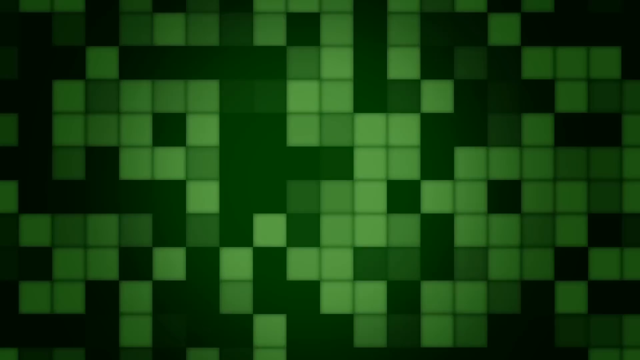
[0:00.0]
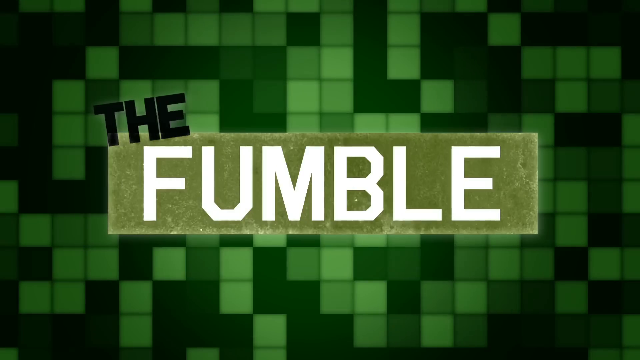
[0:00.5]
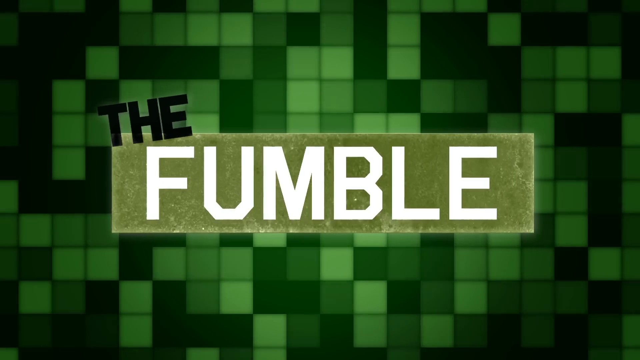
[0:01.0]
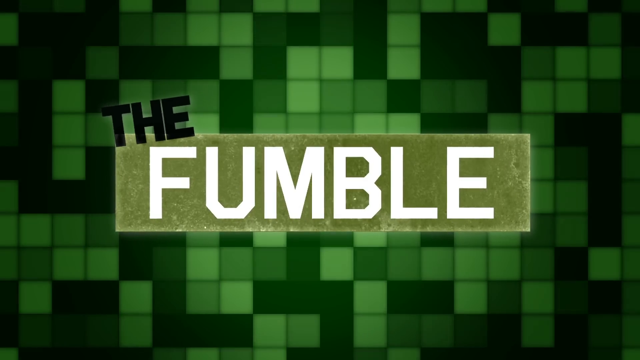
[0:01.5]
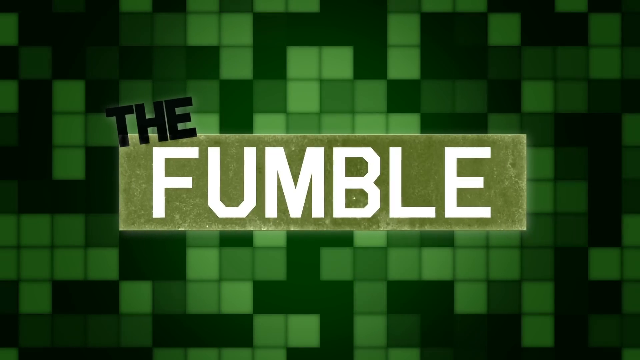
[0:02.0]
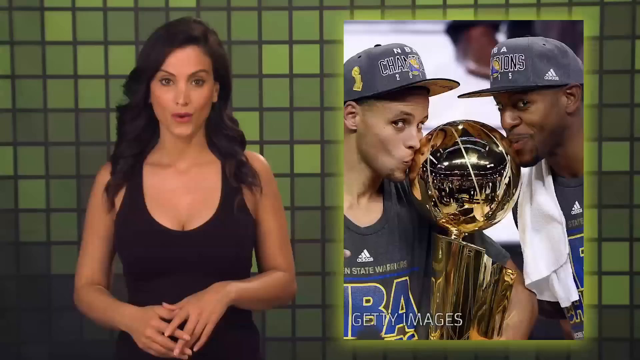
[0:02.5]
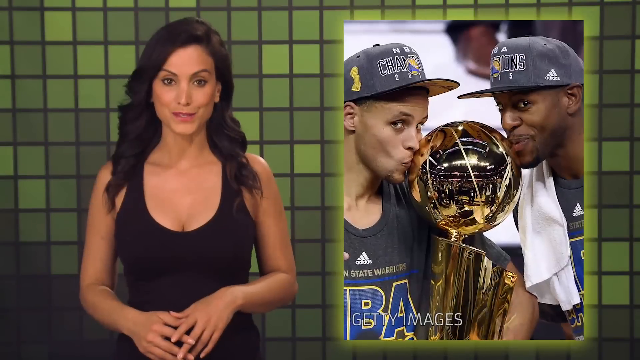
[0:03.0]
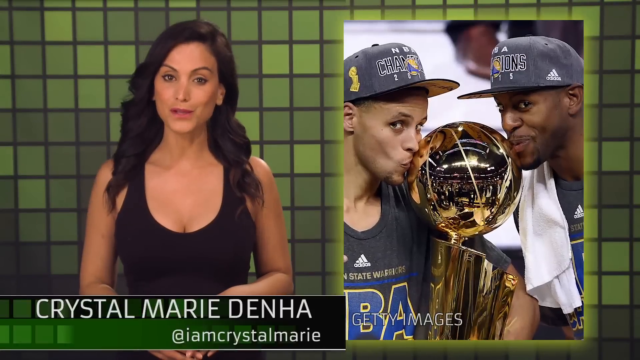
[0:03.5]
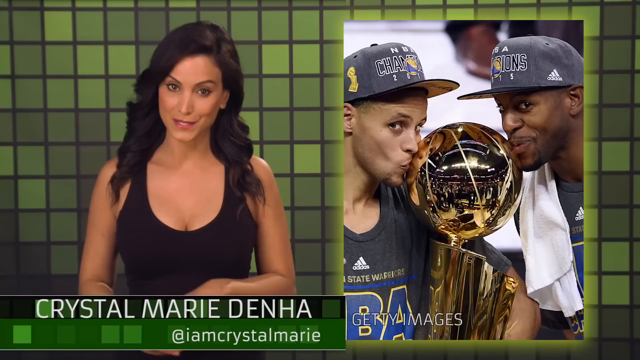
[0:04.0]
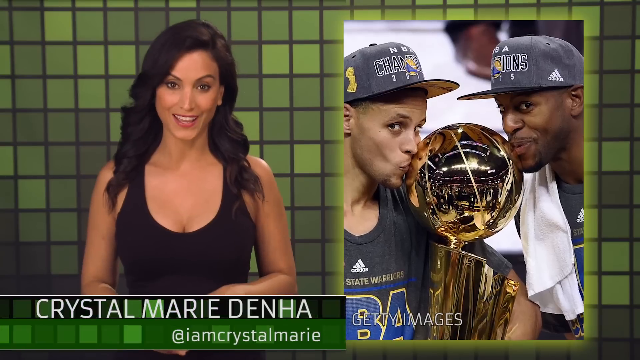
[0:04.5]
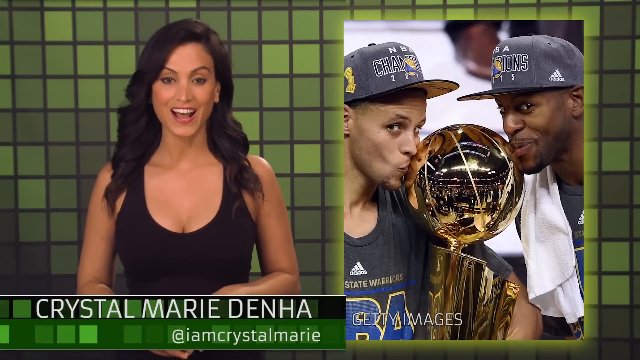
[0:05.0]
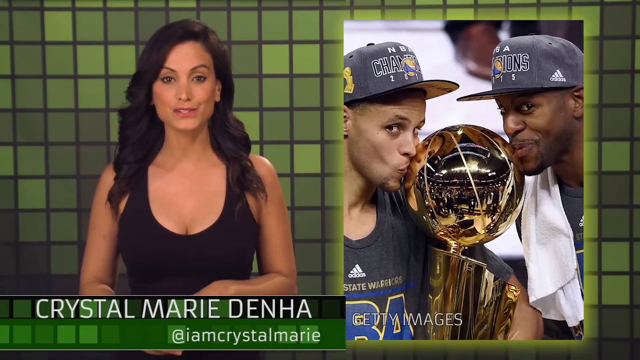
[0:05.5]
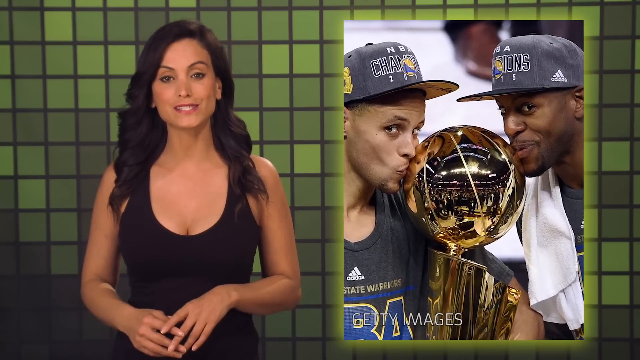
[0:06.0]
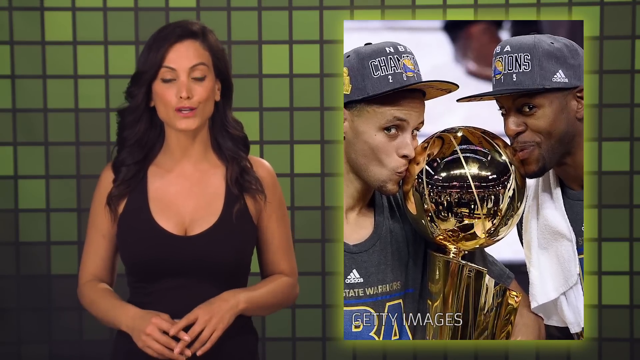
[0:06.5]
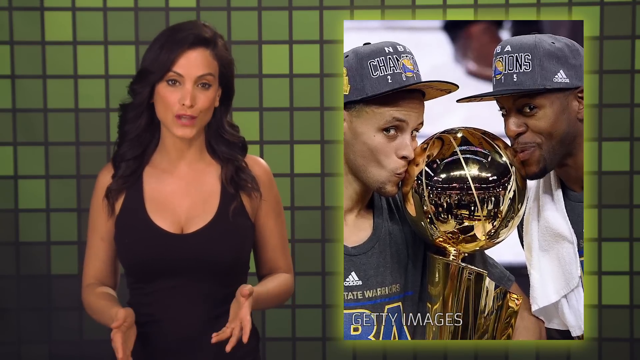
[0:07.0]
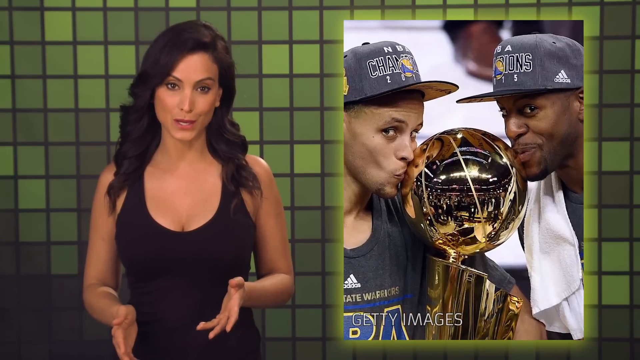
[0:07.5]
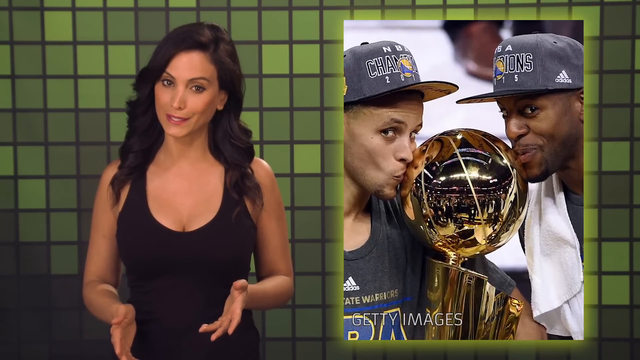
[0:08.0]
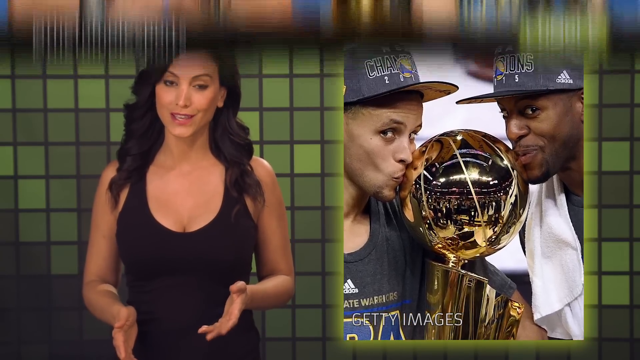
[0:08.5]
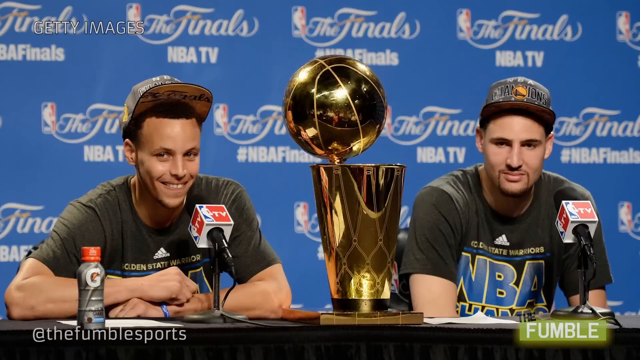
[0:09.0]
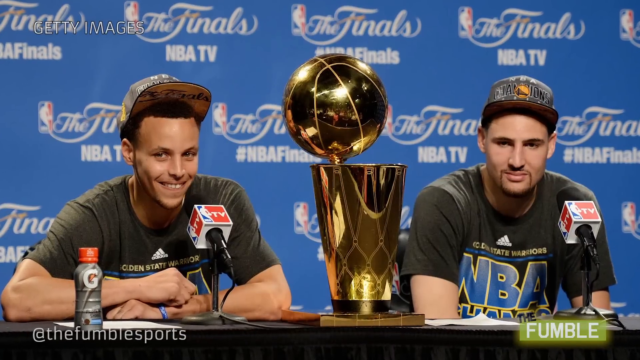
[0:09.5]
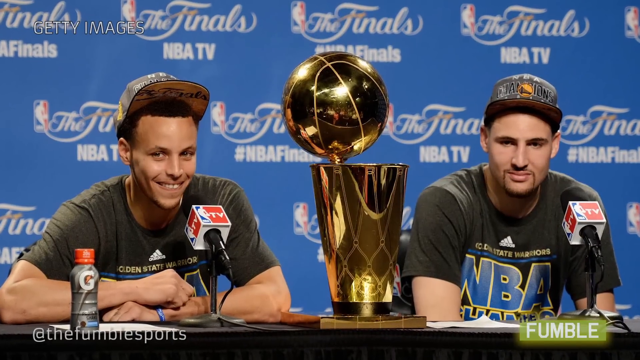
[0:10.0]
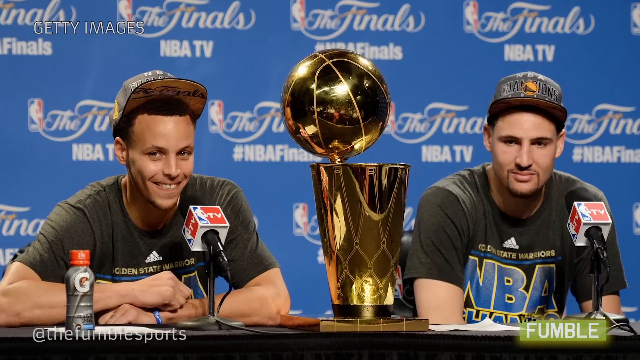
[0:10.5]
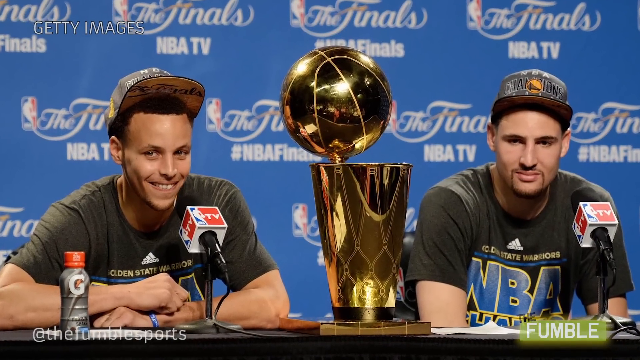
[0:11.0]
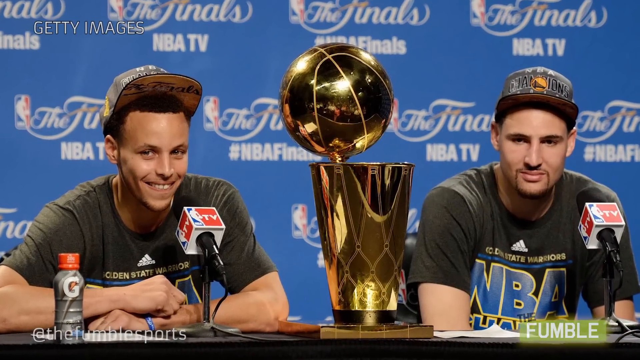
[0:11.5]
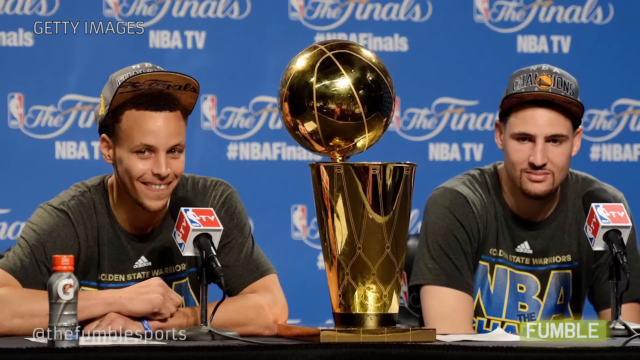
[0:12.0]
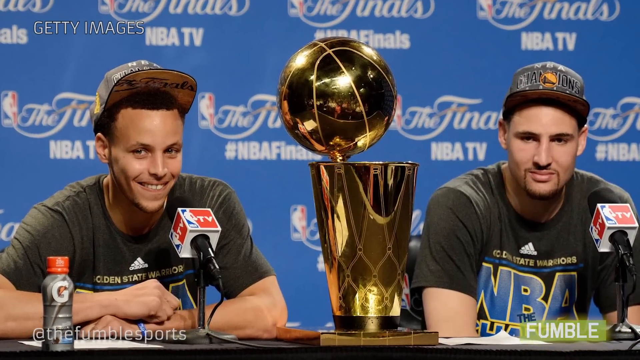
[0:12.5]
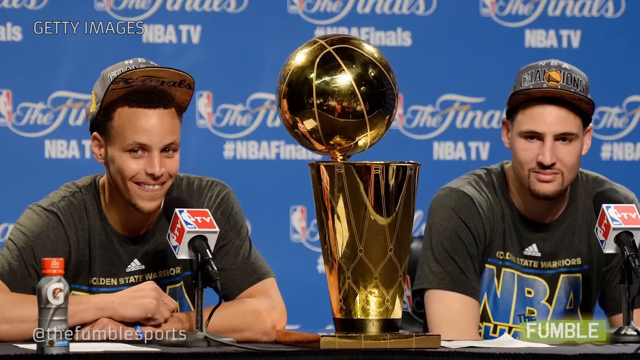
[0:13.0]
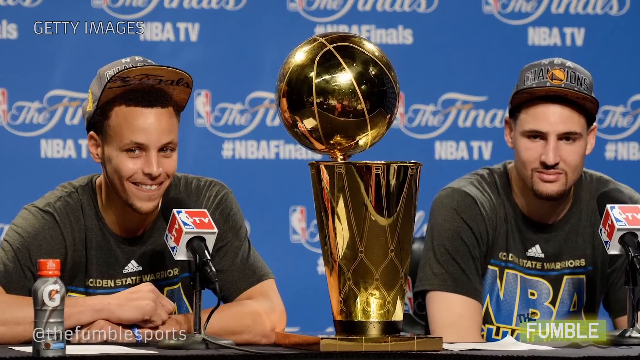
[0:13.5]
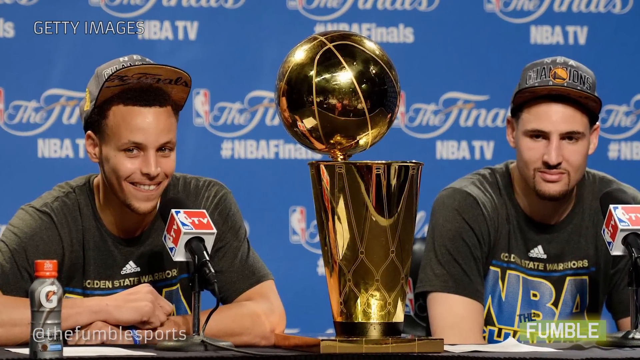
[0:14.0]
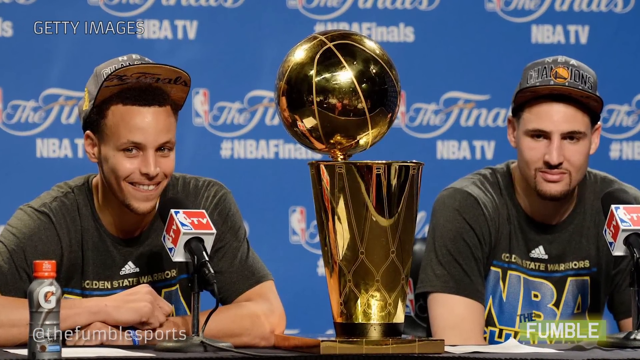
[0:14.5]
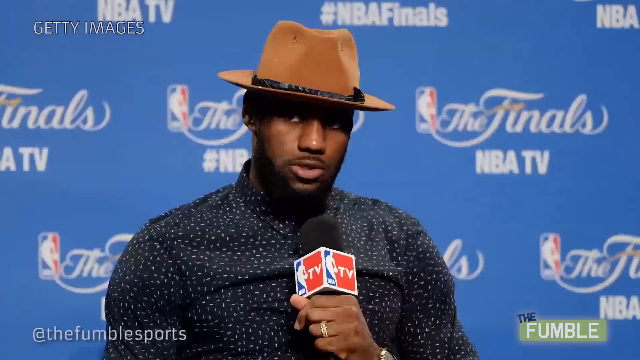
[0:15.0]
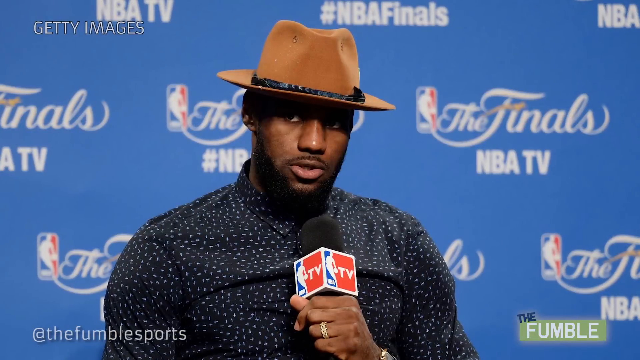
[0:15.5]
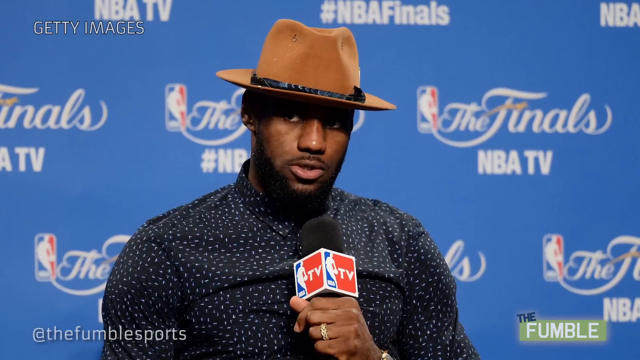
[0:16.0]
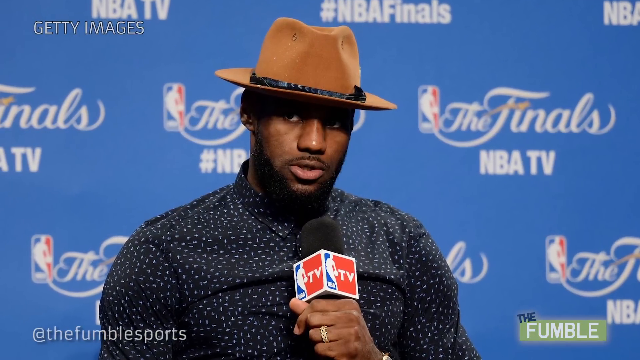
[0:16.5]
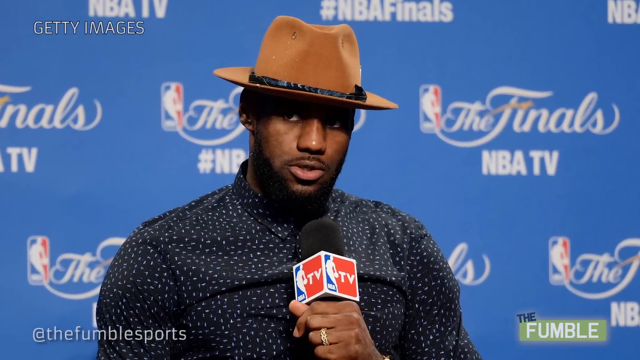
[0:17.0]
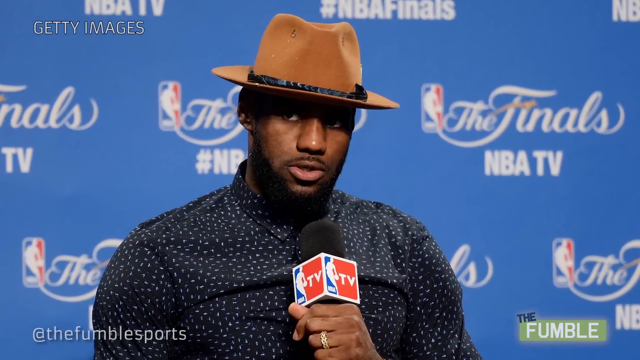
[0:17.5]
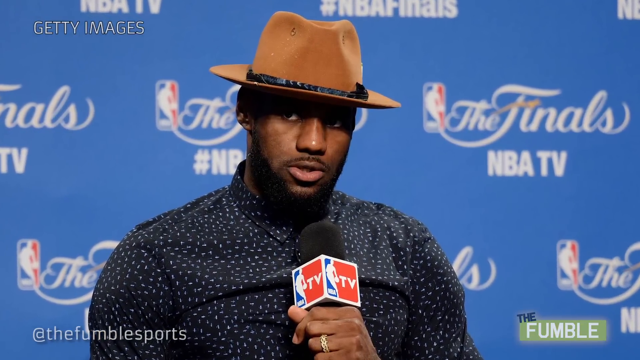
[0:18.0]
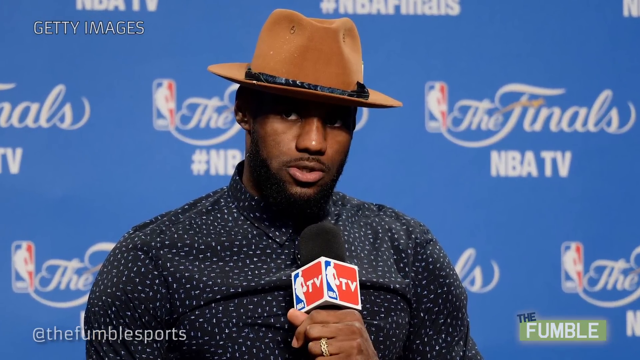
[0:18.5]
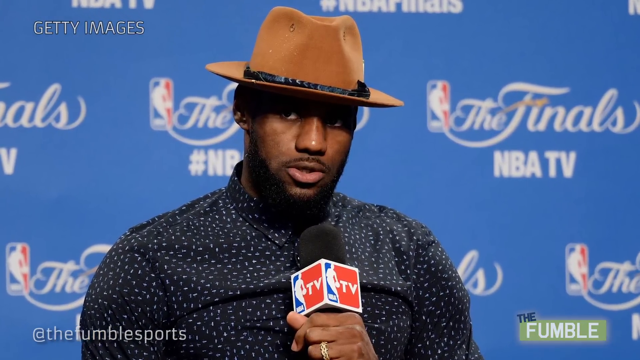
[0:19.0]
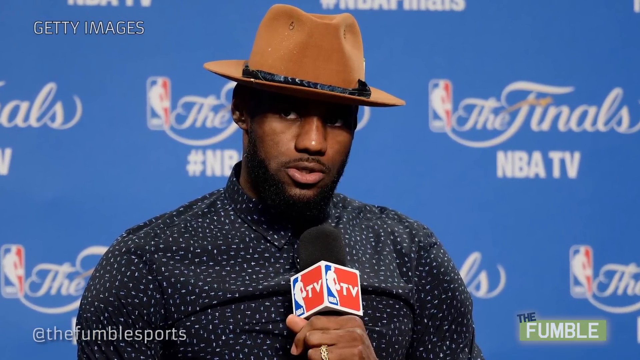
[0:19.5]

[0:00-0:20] The video opens on a chequered board in different shades of green. An intro moves into the centre of the screen with black text reading "THE" and white text reading "FUMBLE", with "FUMBLE" surrounded by a light green box. The intro screen fades out slightly, then shoots toward the camera as the scene transitions to the chequered green background. A woman with long black hair in a black tank top stands on the left side of the screen, with a green and black text box beneath her containing white text that reads "@CRYSTALMARIEDENHA". On the right-hand side is a picture of what looks to be two basketball champions wearing NBA champion hats kissing a trophy. The woman talks to the camera with her hands clasped at belly height, occasionally separating them, open palms facing inward, as she expresses different thoughts. The scene transitions to two basketball players sitting with red, blue and black microphones in front of them and a trophy in the middle, in front of a blue background with white text reading "THE FINALS NBA TV". They smile and look to the right as the image zooms in on them. Next comes a shot of LeBron James holding a microphone in his left hand, wearing a brown cowboy-style hat and a navy blue shirt with white specks, sitting in front of the blue "THE FINALS NBA TV" background. The camera zooms in on him.